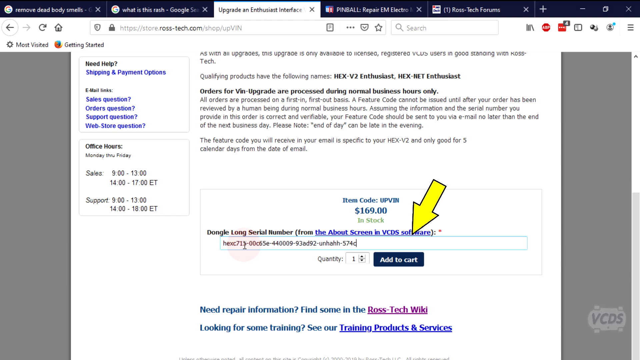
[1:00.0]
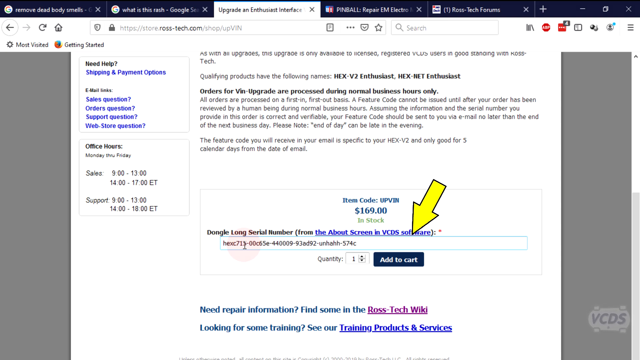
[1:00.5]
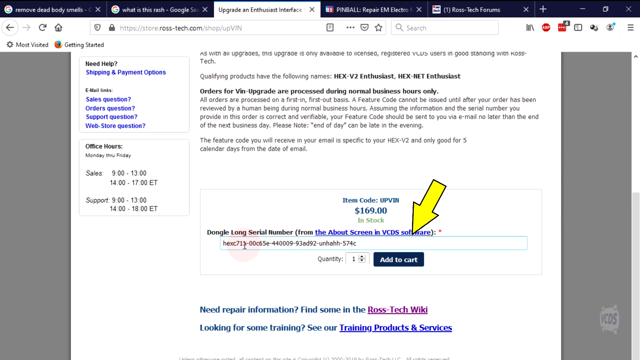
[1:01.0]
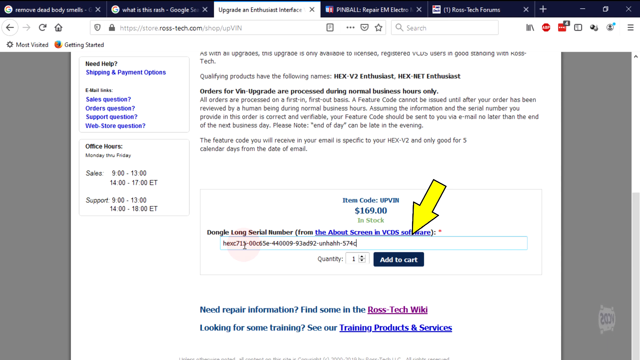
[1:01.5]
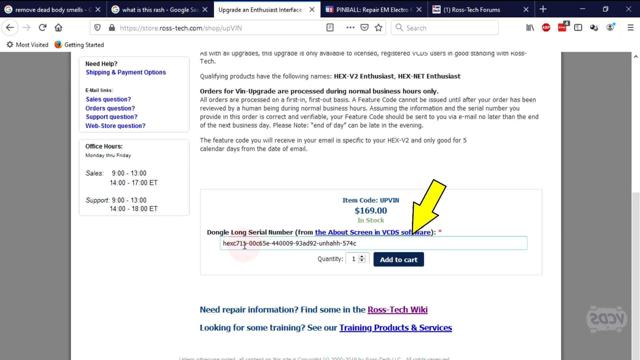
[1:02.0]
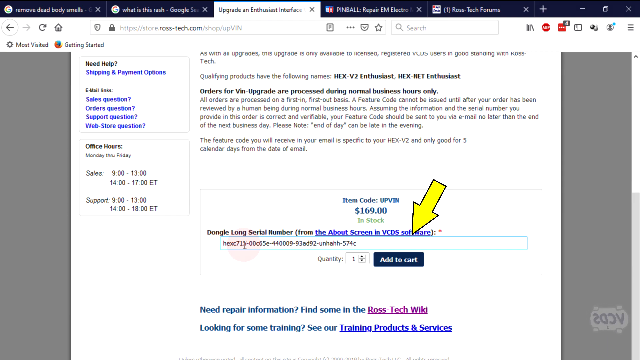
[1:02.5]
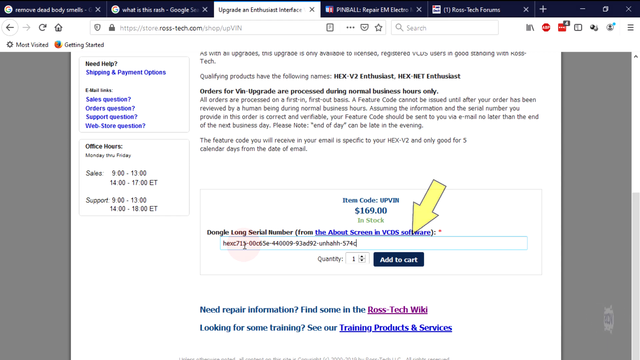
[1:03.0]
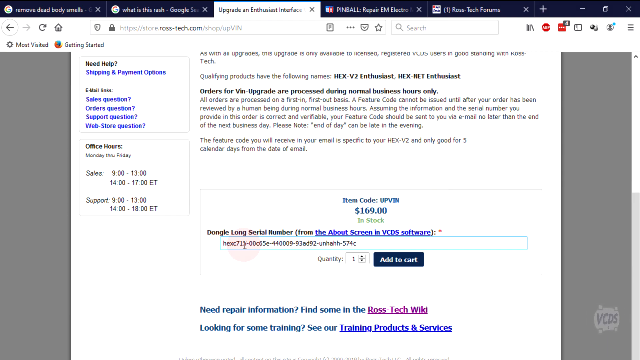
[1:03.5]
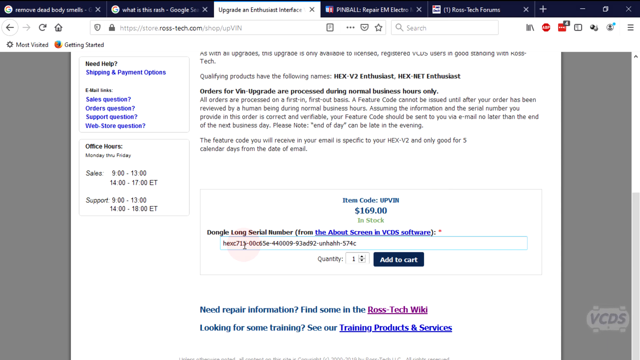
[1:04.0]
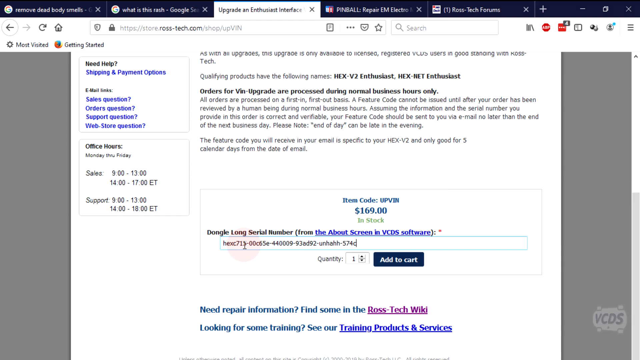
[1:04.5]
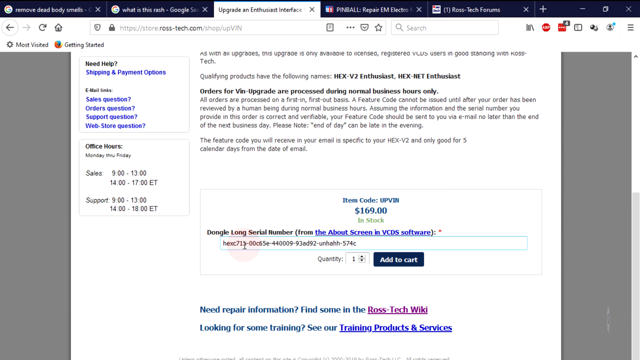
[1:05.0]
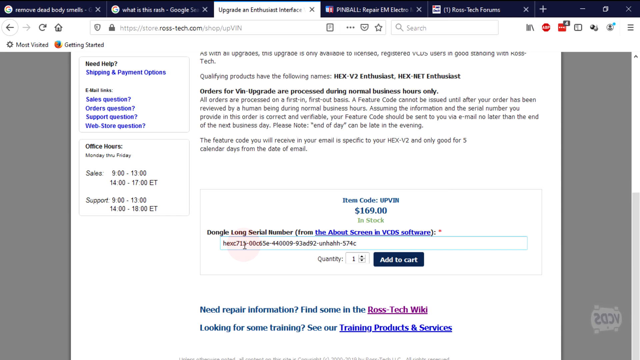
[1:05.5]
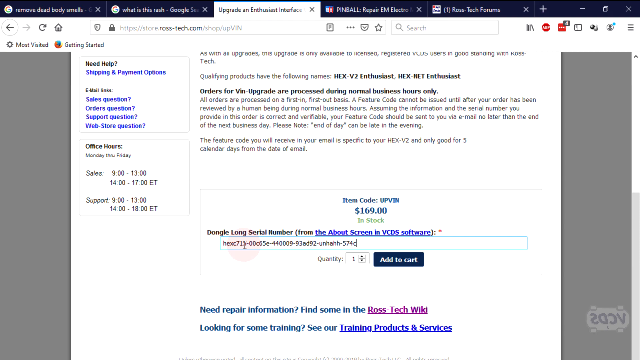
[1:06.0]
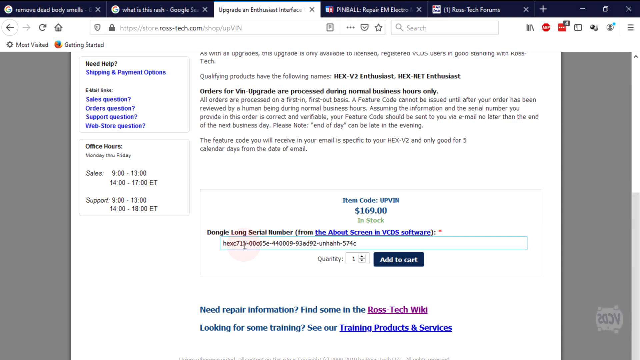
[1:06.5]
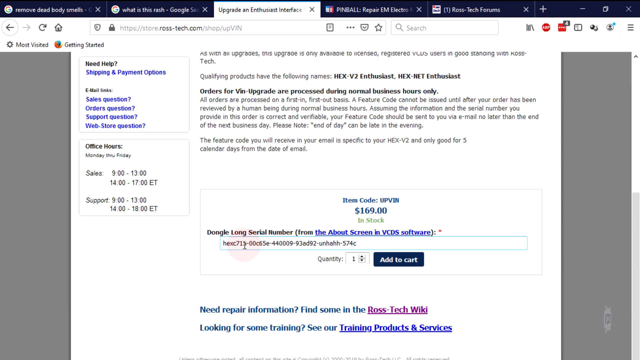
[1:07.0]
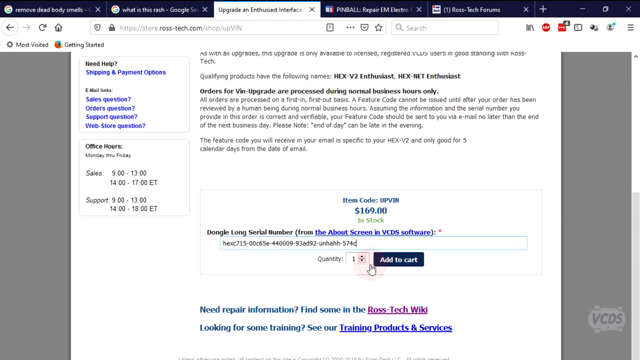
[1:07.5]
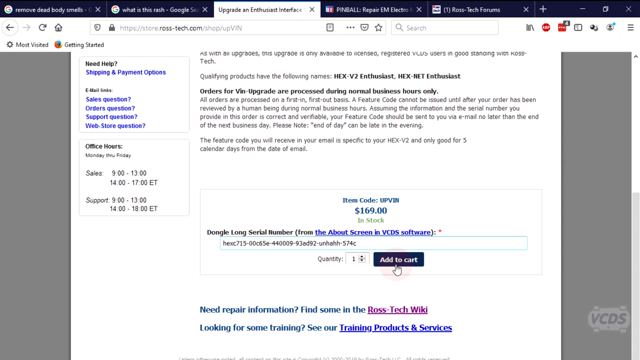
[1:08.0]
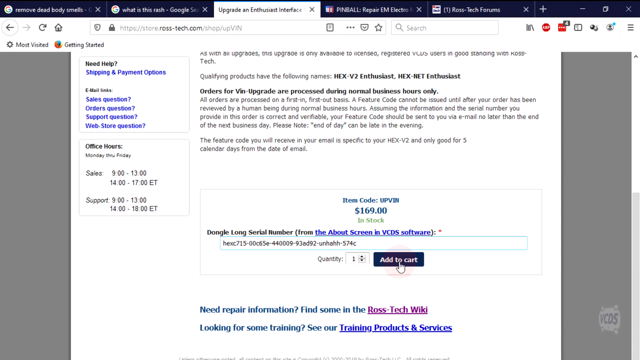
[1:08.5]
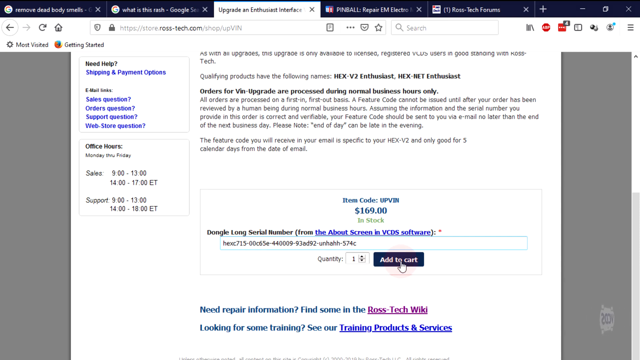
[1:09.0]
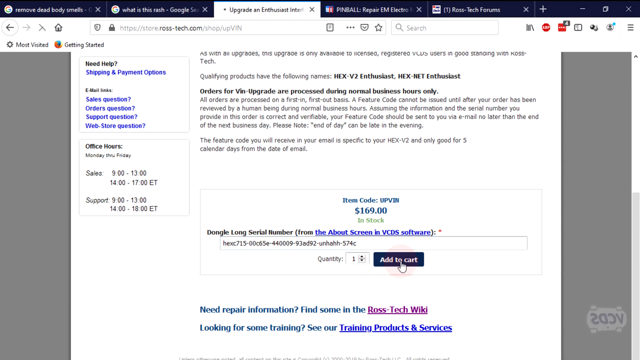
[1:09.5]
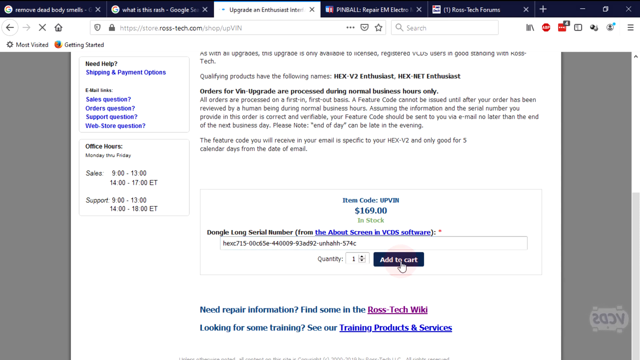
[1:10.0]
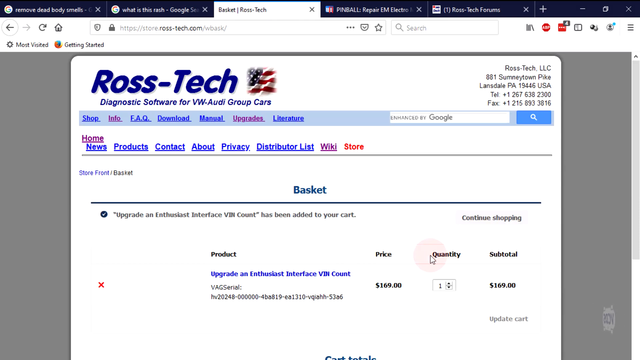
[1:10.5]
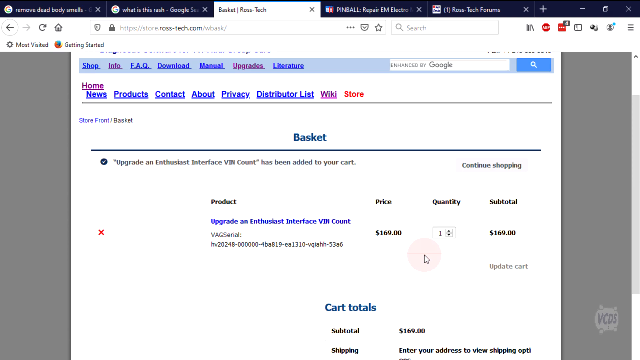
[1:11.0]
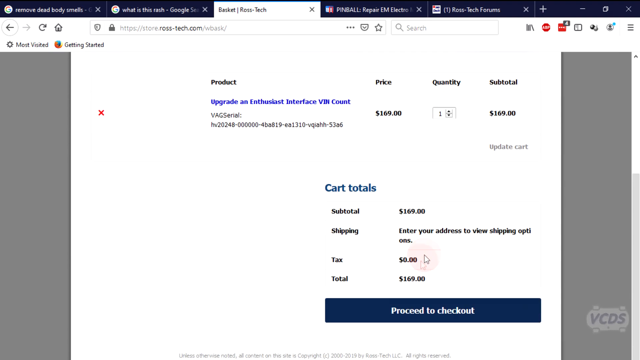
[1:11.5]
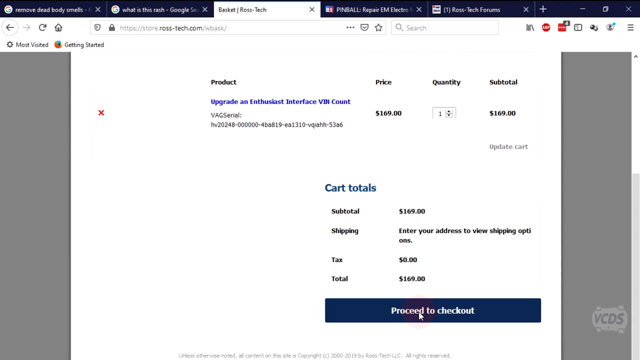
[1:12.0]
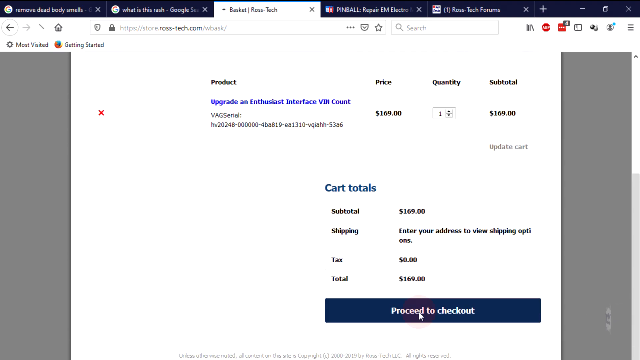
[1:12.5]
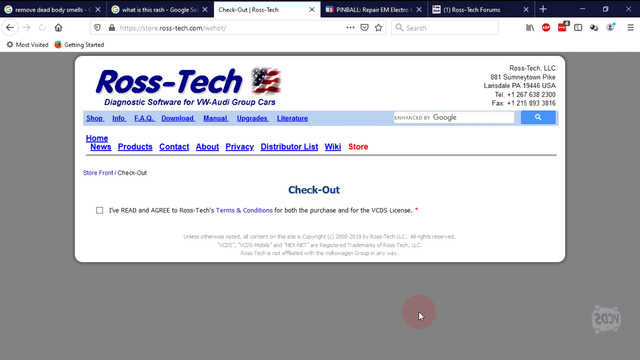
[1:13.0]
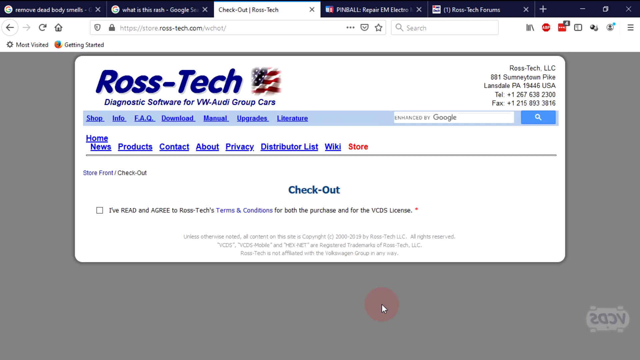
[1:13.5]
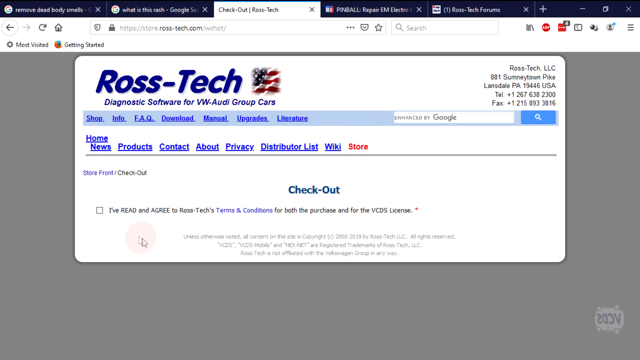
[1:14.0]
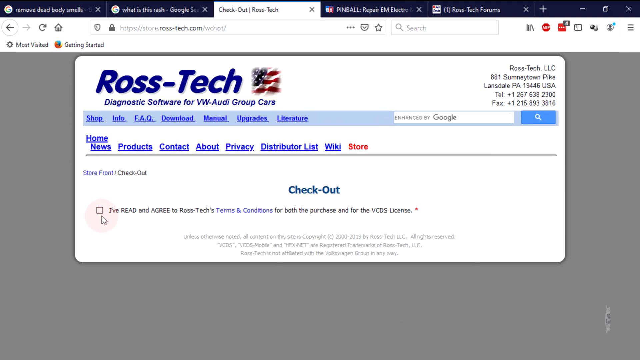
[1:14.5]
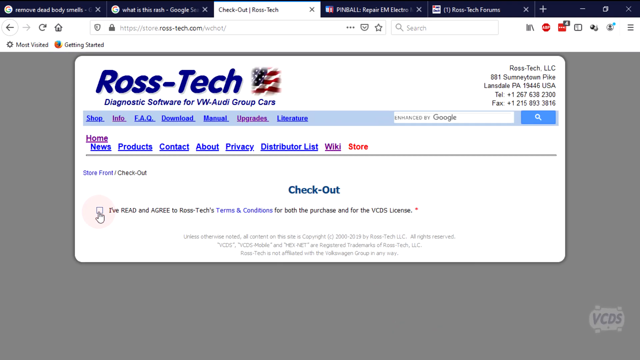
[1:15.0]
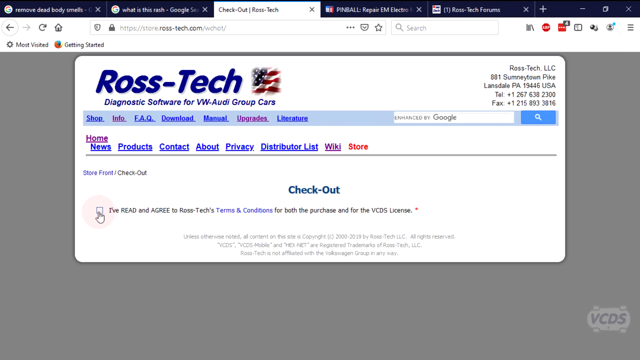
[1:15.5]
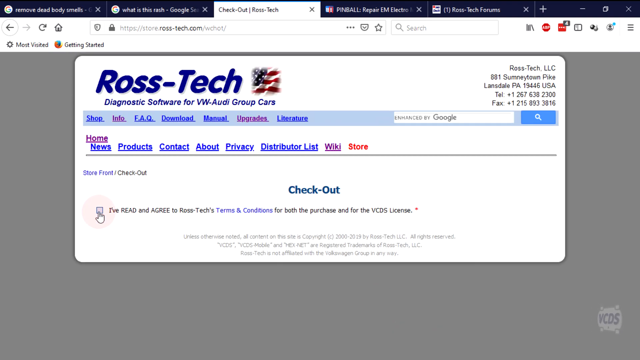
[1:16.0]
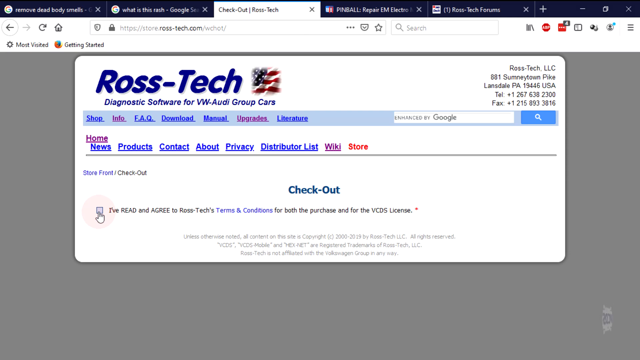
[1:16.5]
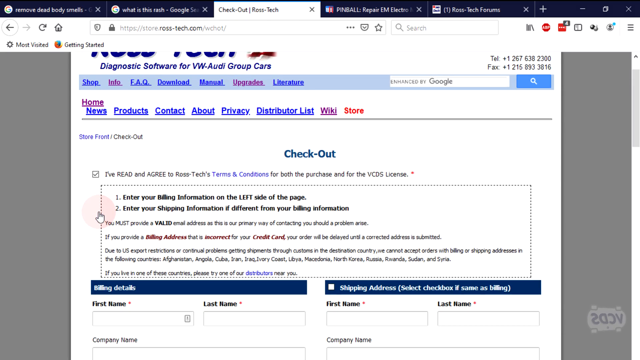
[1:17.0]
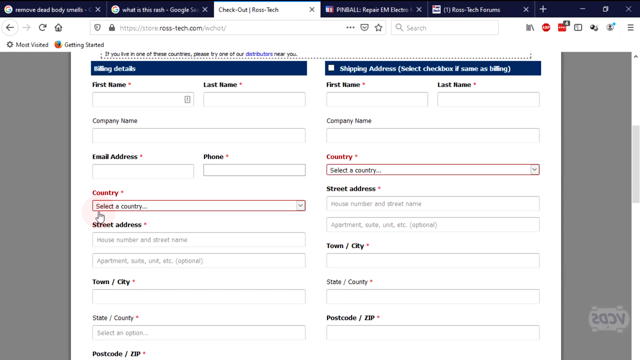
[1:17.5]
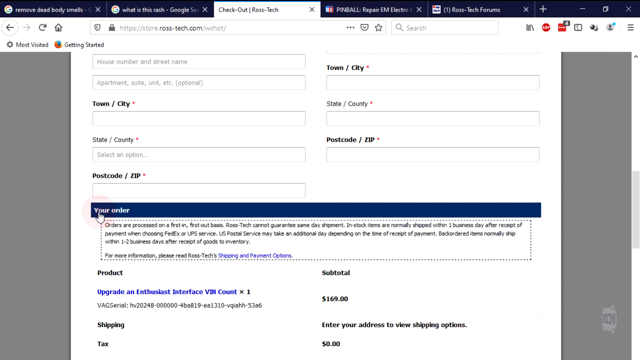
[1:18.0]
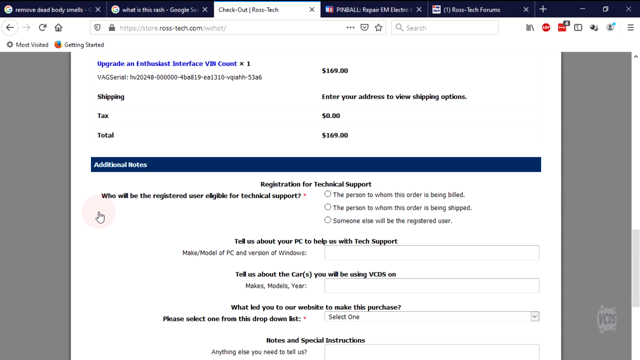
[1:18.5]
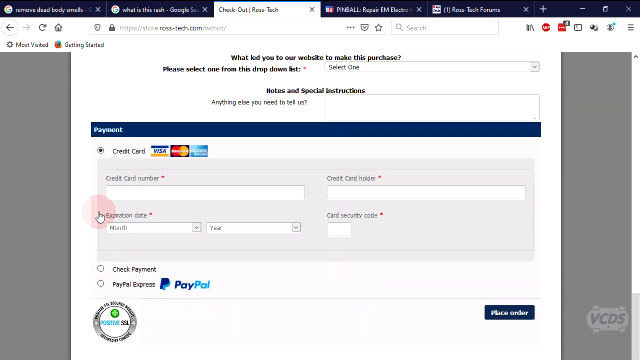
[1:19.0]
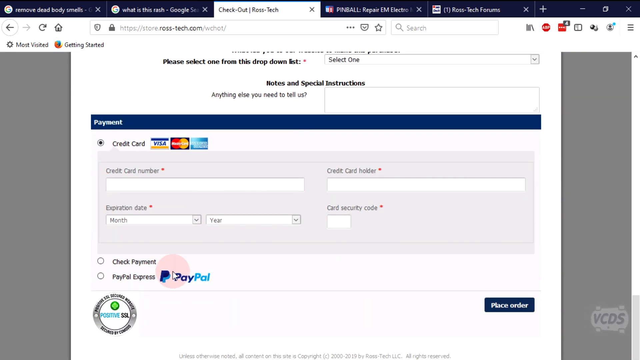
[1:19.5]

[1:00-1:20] A computer monitor shows the currently open tab, which reads "store.rosstech.com/shop/up." A bright yellow arrow points to the part, the "hex v2." Bold black text reads "orders for VIN upgrade are processed during normal business hours only." The arrow points to the item code and the price, $169, and the item is shown as in stock. At the bottom center of the screen the arrow points to the add to cart button. On the left side, office hours are listed as sales 9 to 1300 and support 9 to 1300. A white VCDS logo spins in the lower right corner. The mouse adds the item to the cart and proceeds to checkout, then clicks to confirm having read and agreed to Ross Tech's terms and conditions. The page scrolls to the payment page.